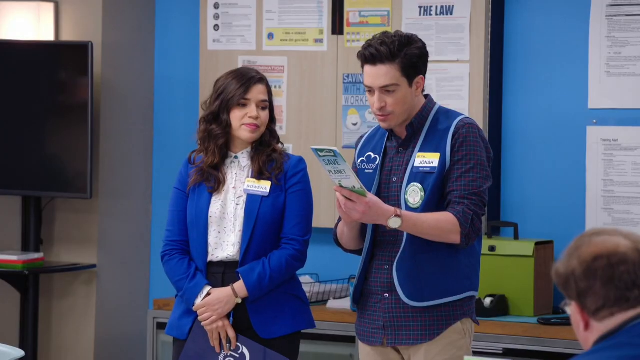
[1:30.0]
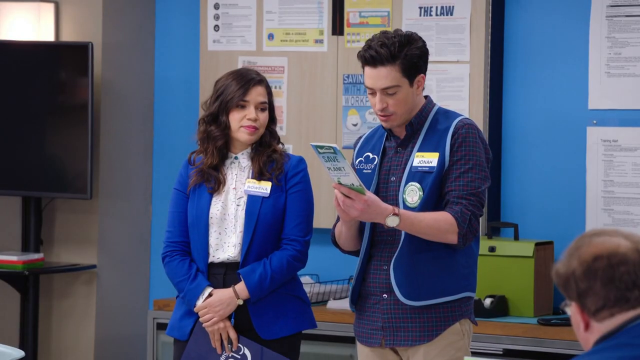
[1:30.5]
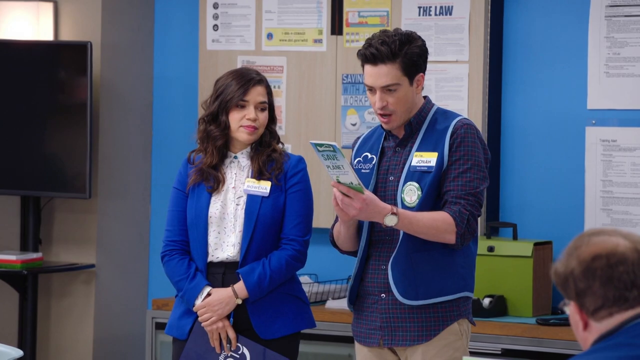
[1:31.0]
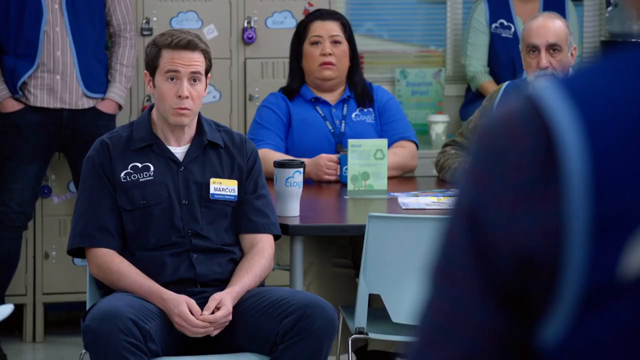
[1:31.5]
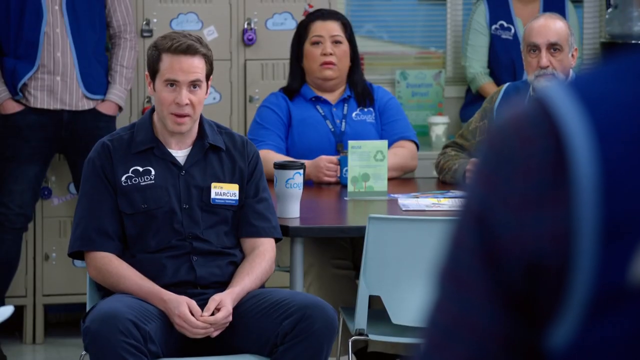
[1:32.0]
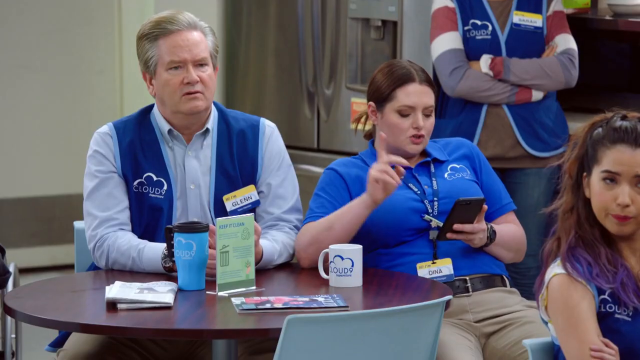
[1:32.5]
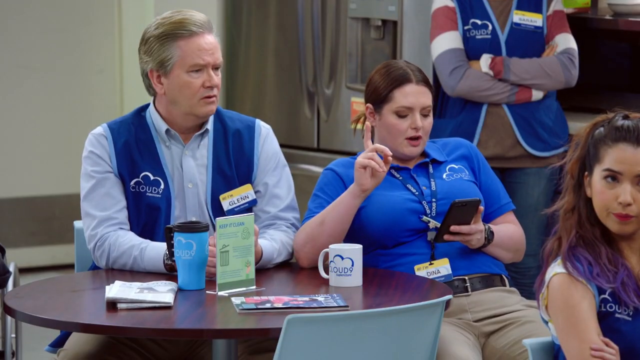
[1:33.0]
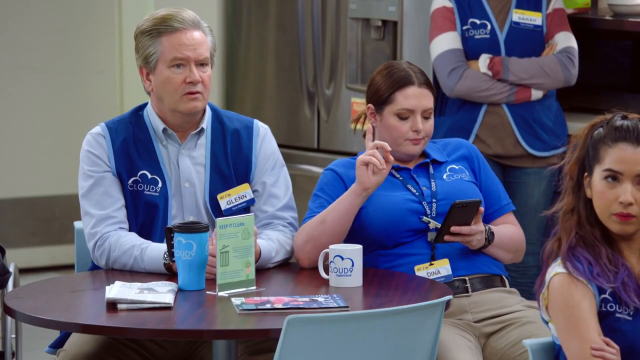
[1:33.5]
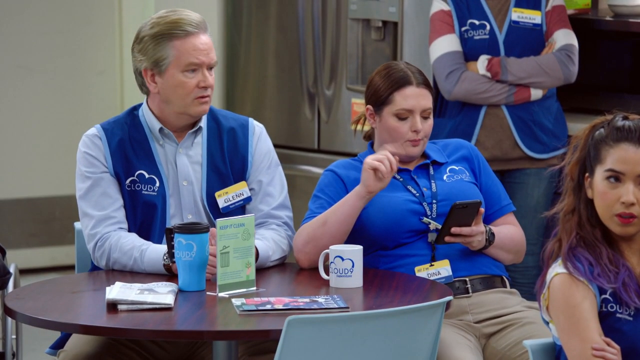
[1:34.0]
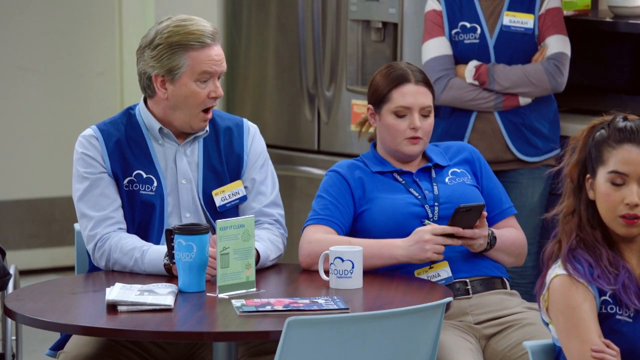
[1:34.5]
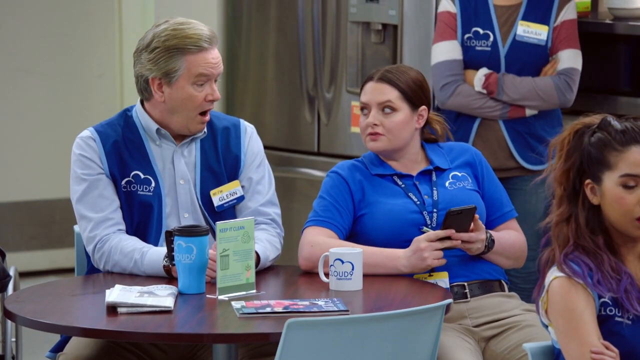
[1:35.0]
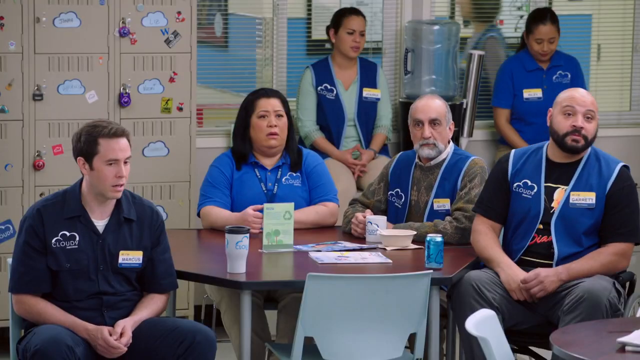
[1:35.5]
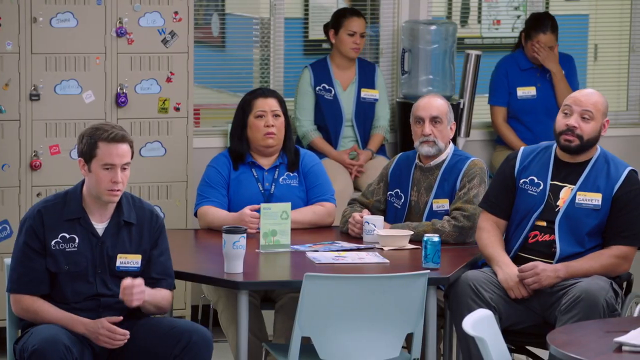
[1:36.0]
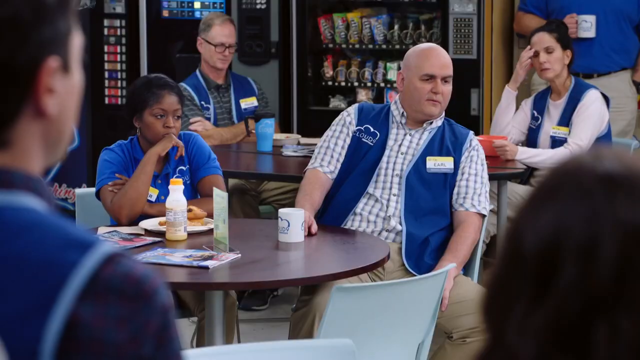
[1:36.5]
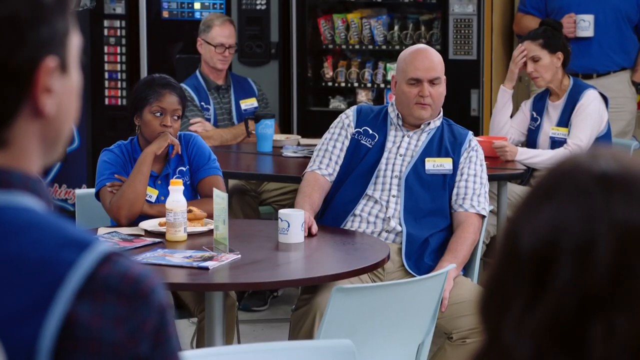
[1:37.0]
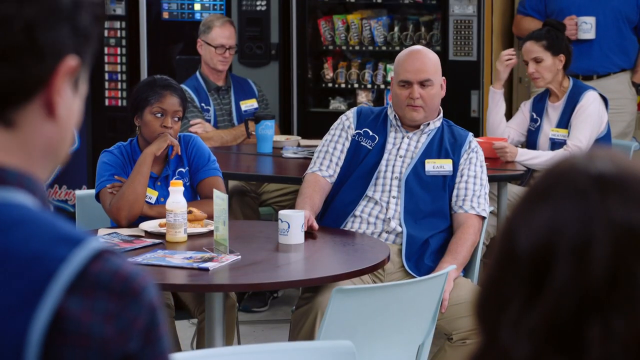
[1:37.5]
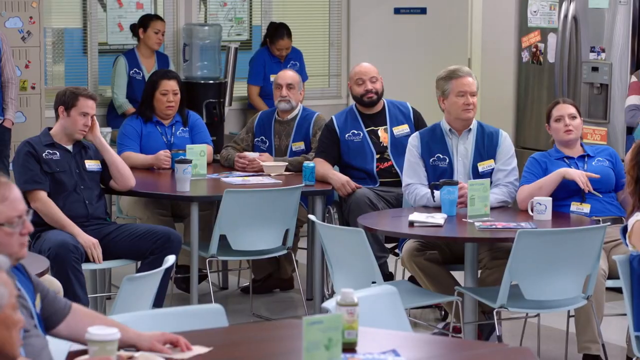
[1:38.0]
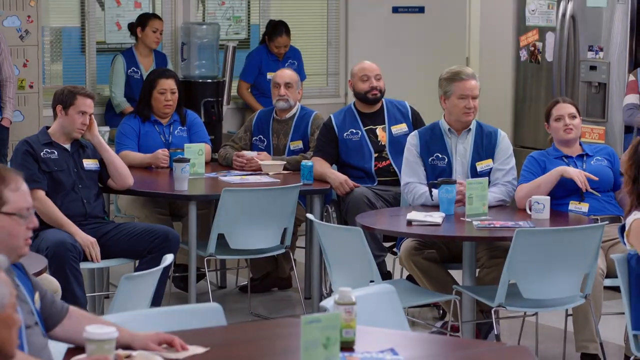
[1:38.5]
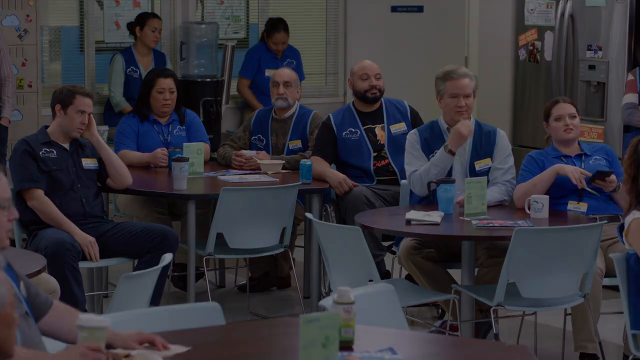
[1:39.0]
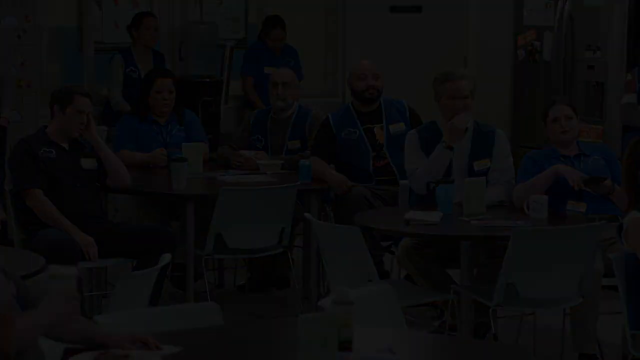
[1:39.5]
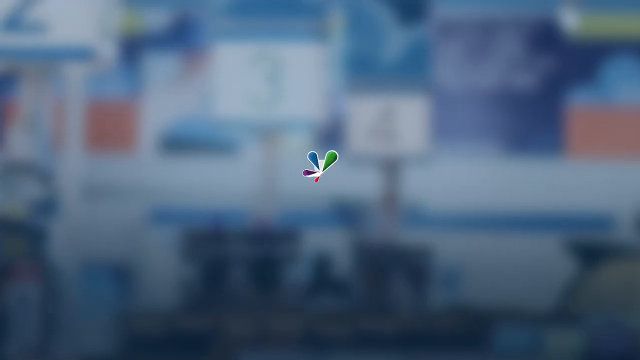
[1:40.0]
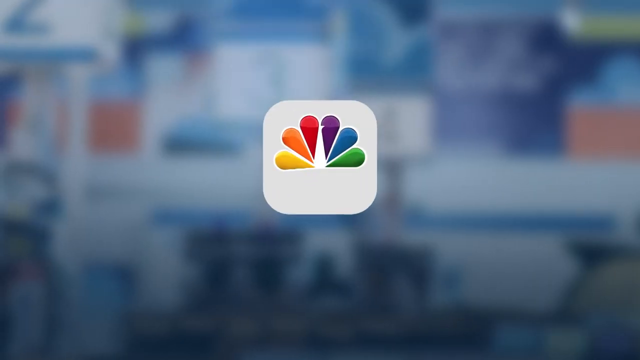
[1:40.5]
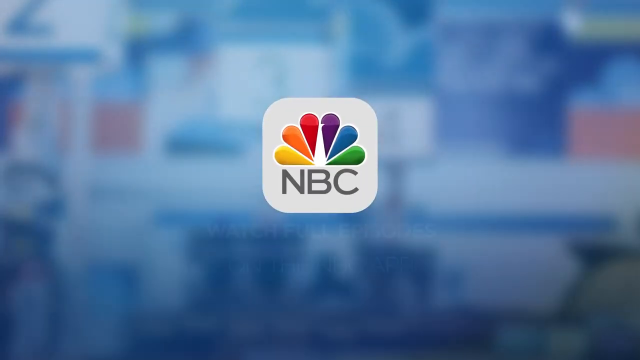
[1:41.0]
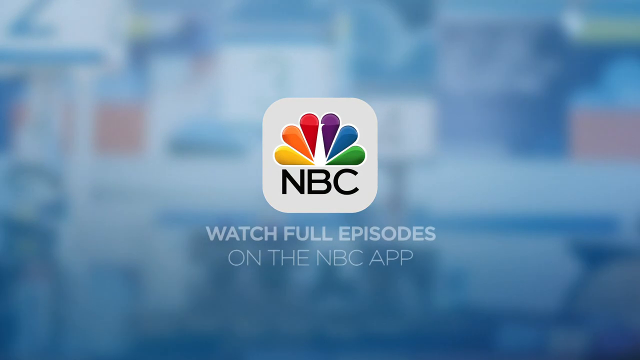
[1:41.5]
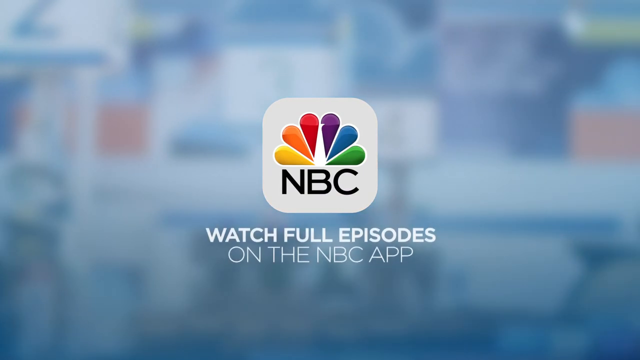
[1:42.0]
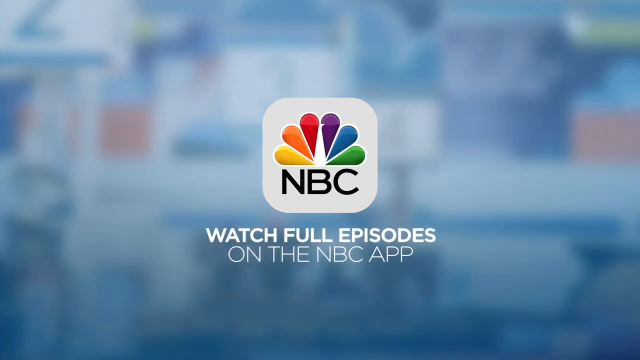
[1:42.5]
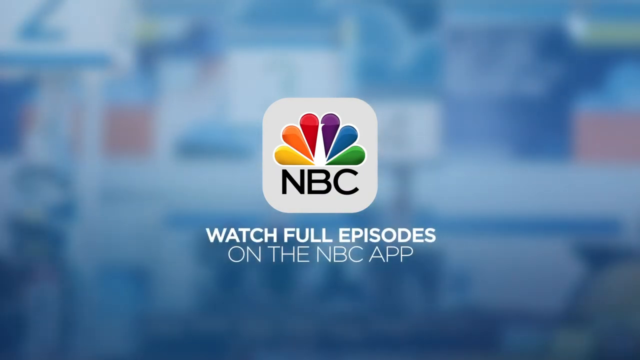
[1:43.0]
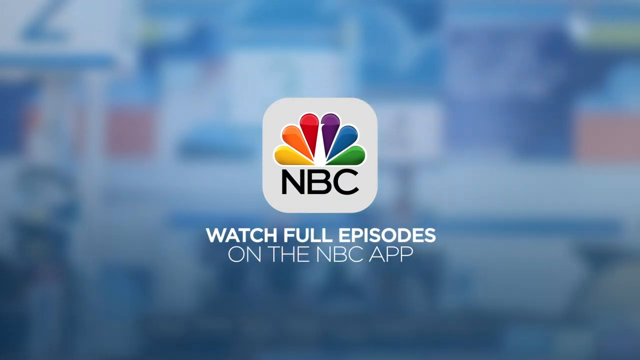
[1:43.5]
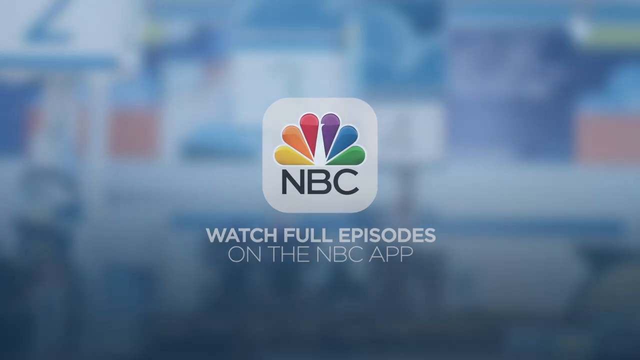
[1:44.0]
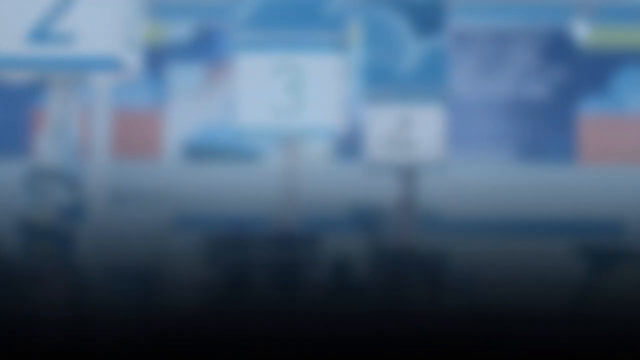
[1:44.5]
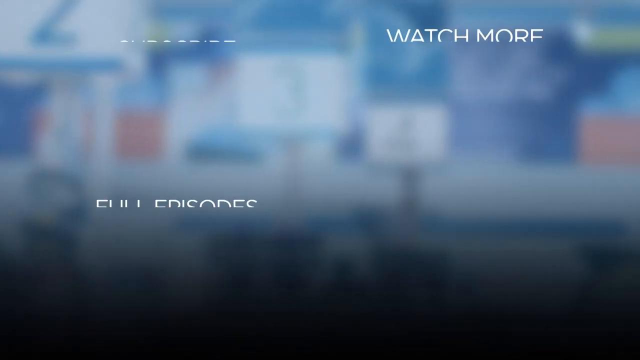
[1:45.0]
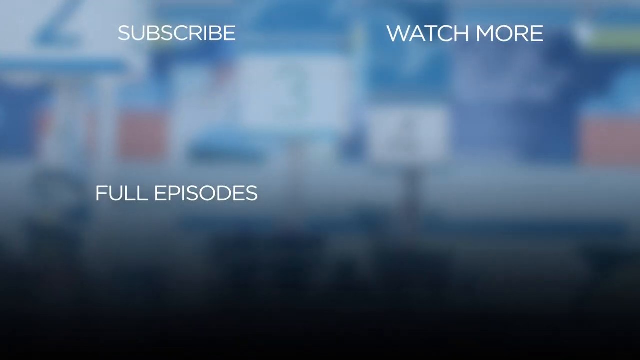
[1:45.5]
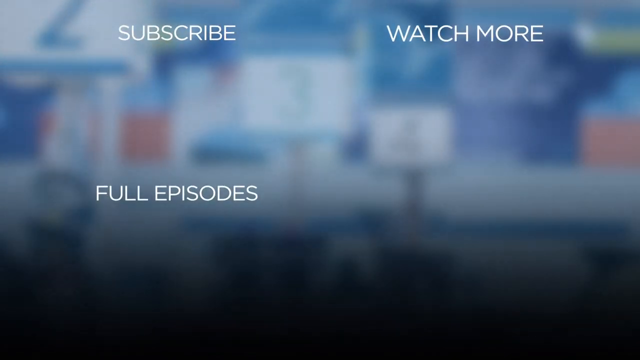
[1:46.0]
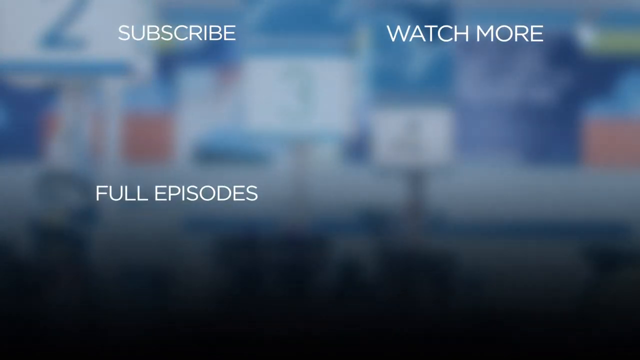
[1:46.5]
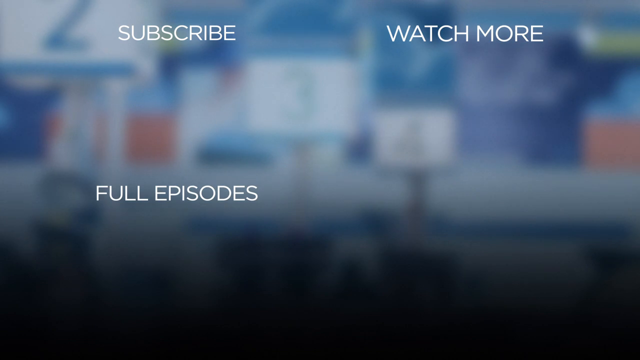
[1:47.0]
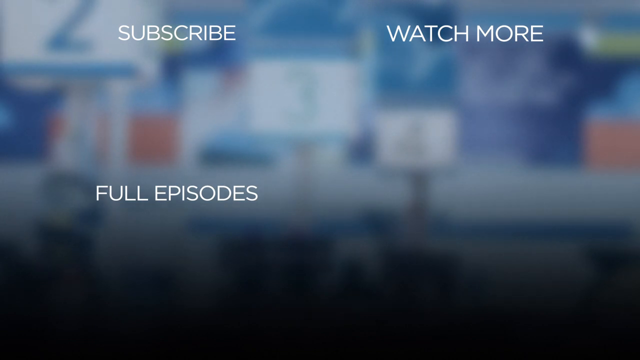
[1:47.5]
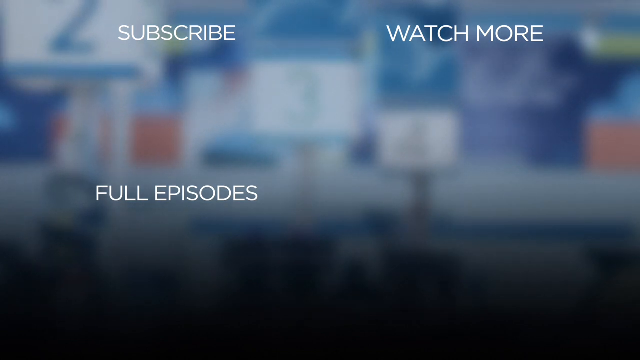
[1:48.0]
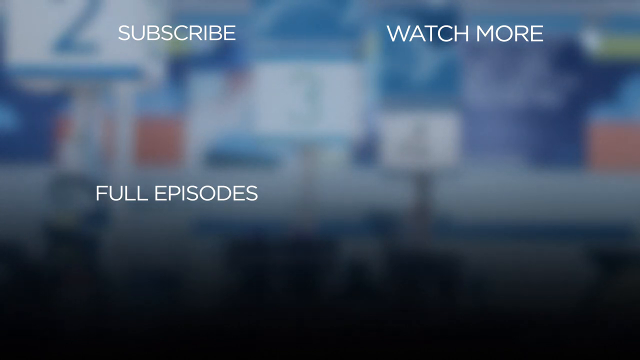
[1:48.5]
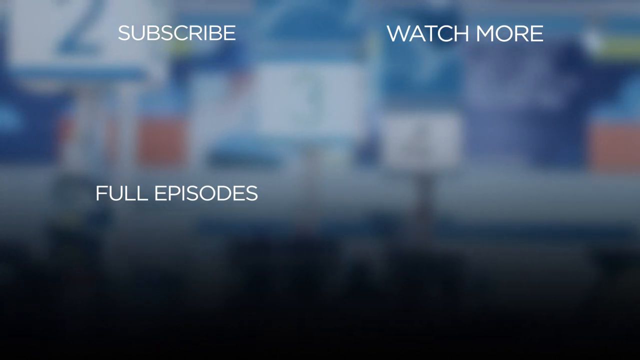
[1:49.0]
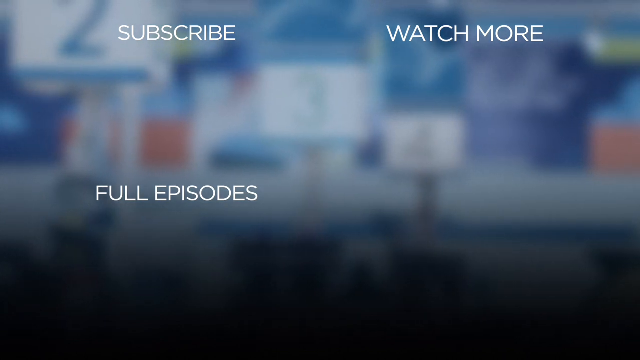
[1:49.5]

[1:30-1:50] The man keeps leaning his head inward, standing upright and reading the brochure, which says "Save the Planet" in blue lettering. The camera cuts to a man with a very concerned, somewhat surprised look, saying something as if shocked. It then cuts to an older gentleman and a woman sitting together at a table; the woman reads something off her phone, pointing with her index finger as she reads, as if correcting something he said. Everyone around the room then has concerned looks on their faces. Finally the video cuts to the NBC network label, with white text below it reading "Watch full episodes on the NBC app."